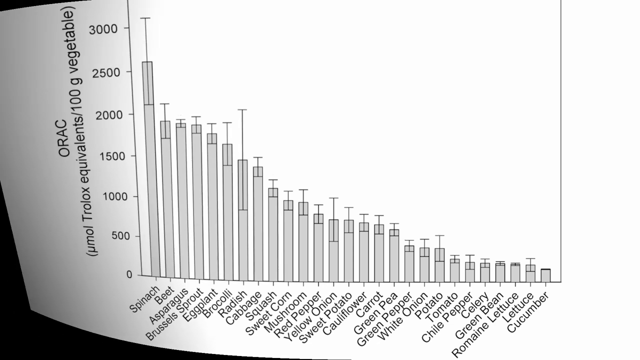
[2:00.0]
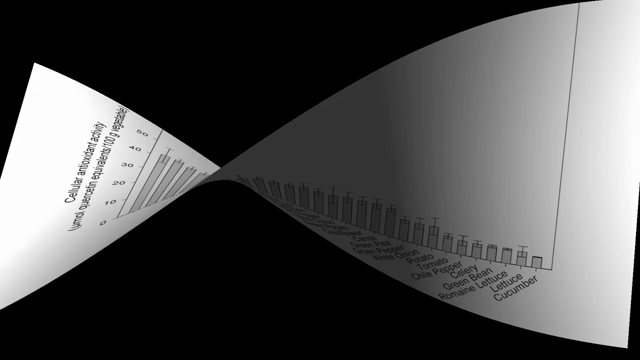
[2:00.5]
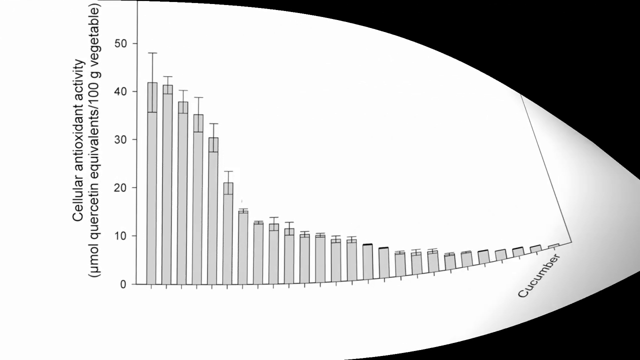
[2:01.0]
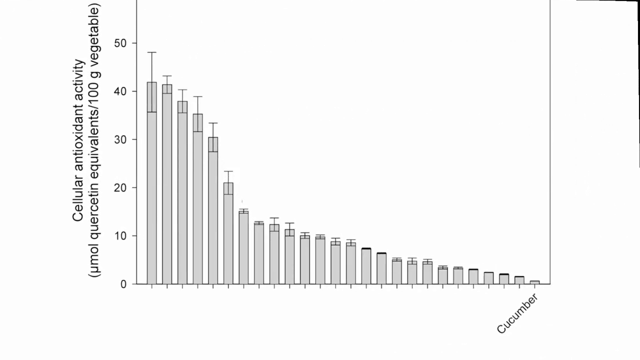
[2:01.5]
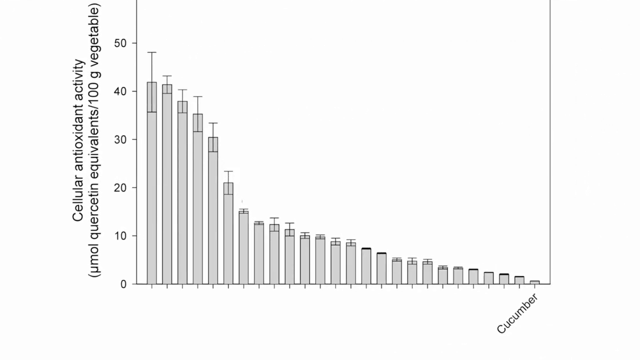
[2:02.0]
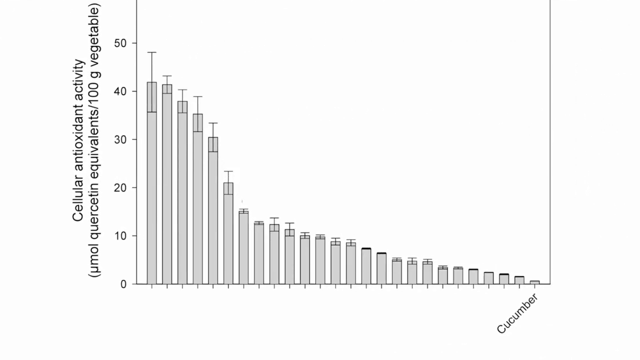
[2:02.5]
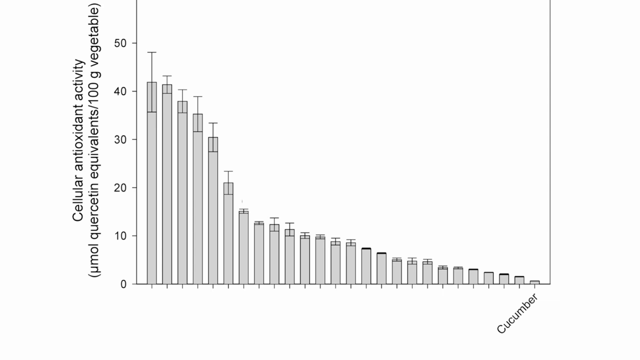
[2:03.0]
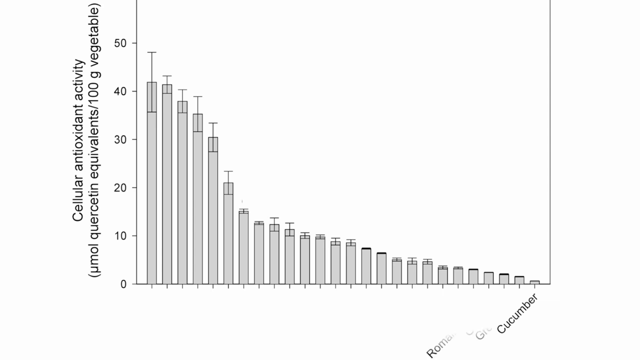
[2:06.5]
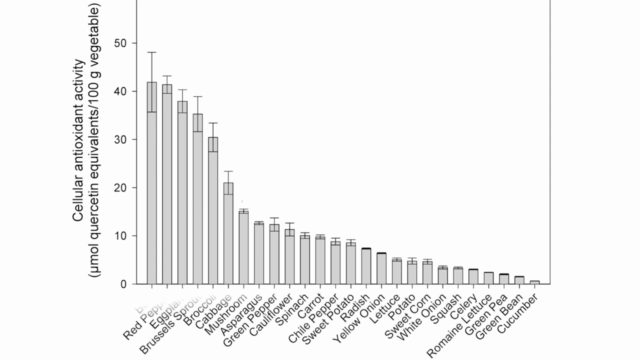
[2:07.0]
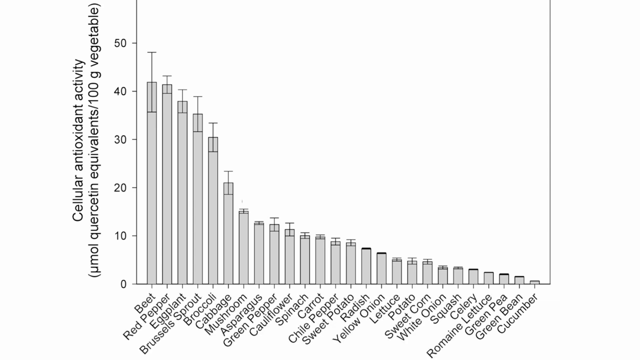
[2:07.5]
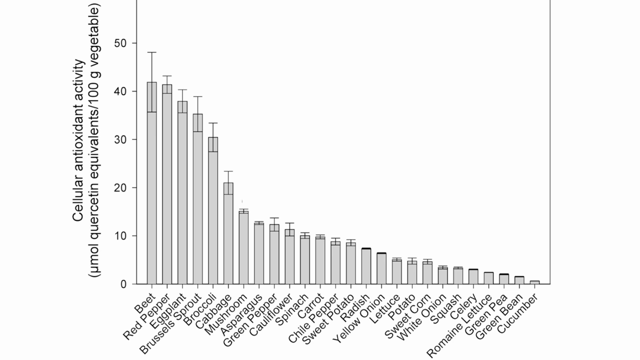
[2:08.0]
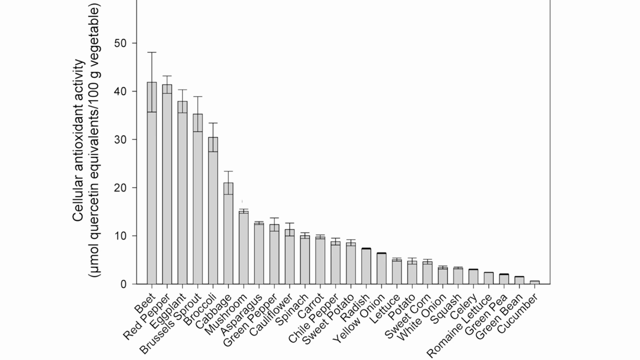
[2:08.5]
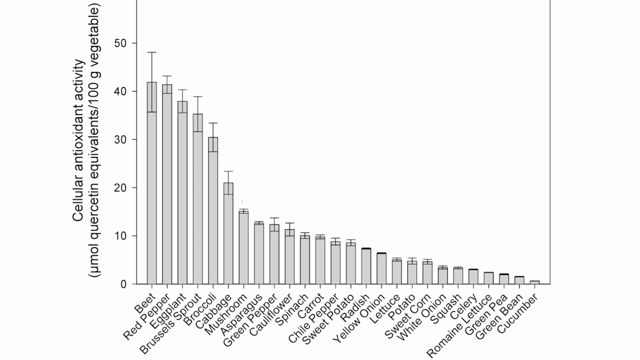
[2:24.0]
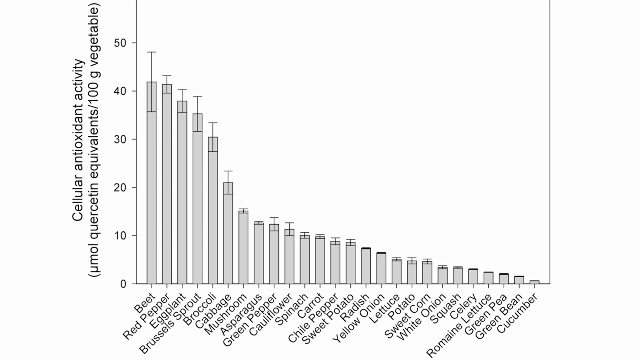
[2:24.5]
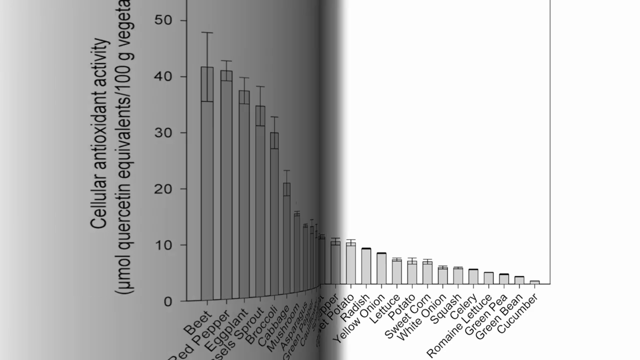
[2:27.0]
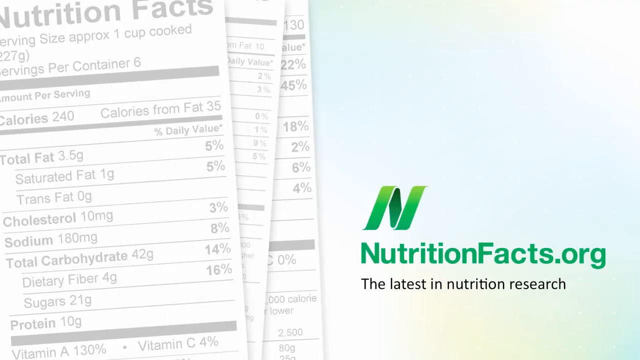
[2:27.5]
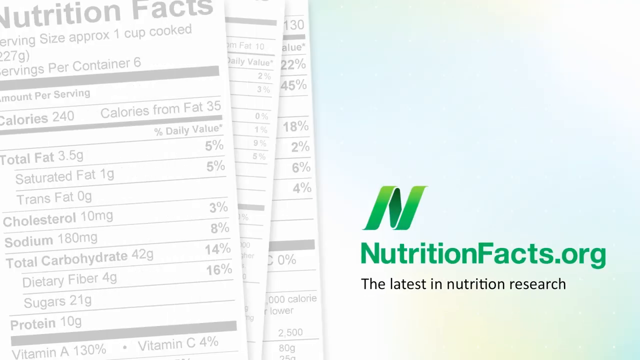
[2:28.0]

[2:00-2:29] A graph twists, and as it twists another graph appears, also black and white, measuring the cellular antioxidant activity of vegetables. The vegetables are listed at the bottom, starting with the beet and ending with the cucumber, with a bar above each vegetable name. Each bar looks like it has a pin with a flat top, though not all of them do; the mushroom and asparagus seem not to have one, along with some at the end of the graph. Then a green and white piece of paper from an article on nutritionfacts.org appears. Agricultural nutrition research appears and disappears as quickly as it appeared. Next, the woman is seen again, hunched over and holding an armful of oranges to her chest.